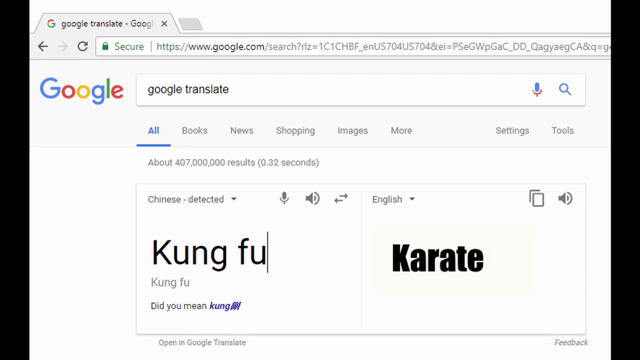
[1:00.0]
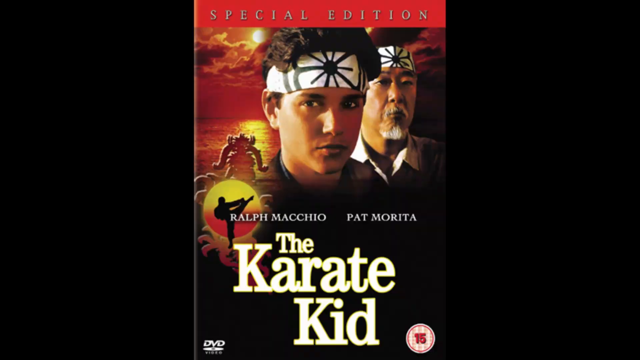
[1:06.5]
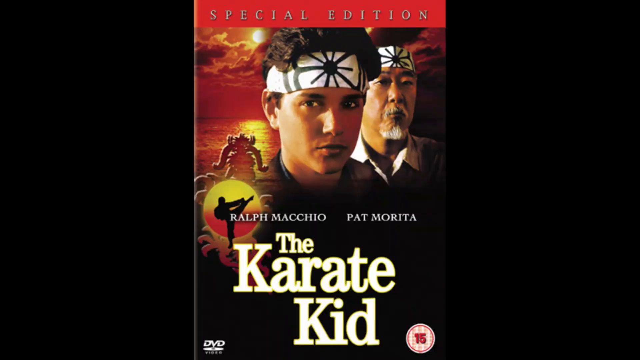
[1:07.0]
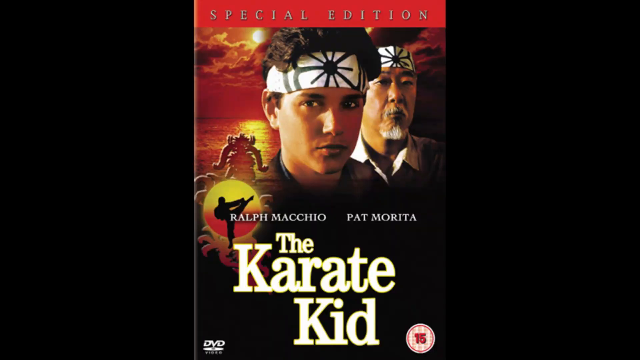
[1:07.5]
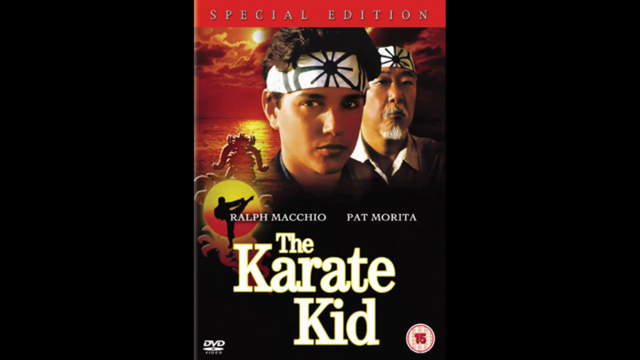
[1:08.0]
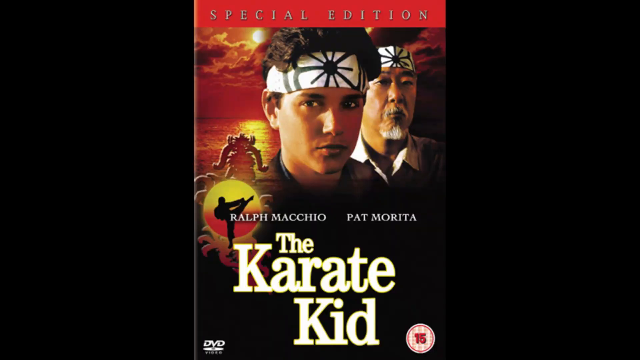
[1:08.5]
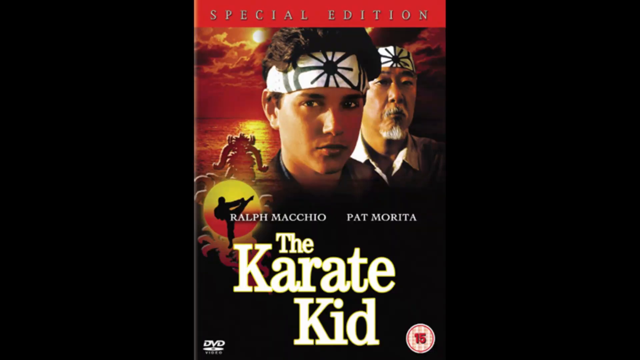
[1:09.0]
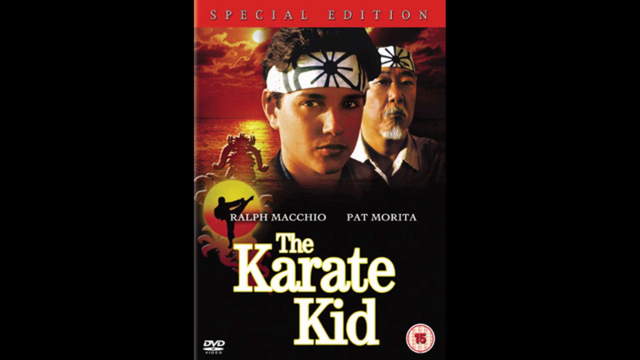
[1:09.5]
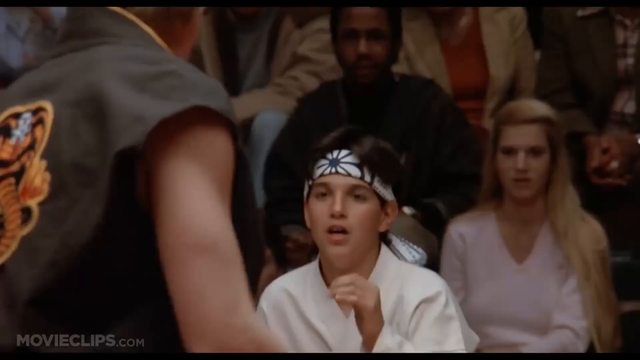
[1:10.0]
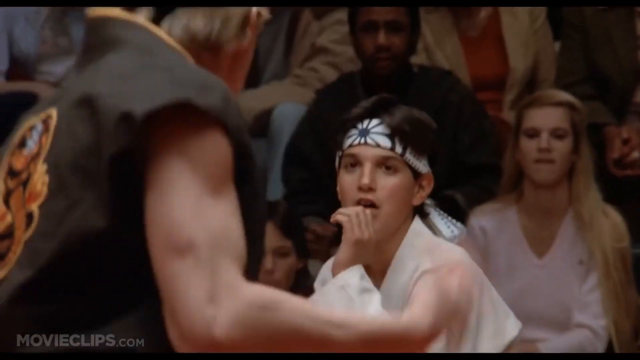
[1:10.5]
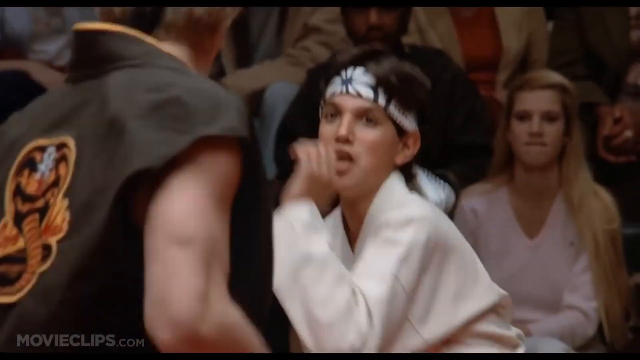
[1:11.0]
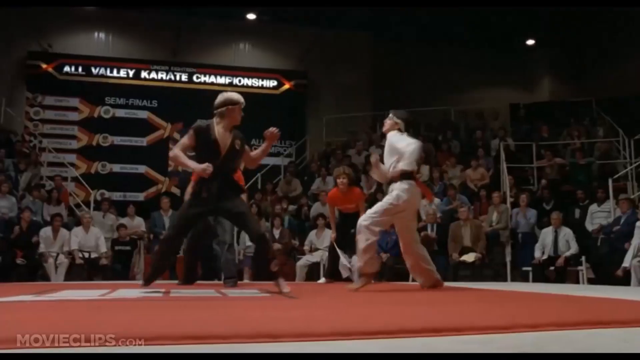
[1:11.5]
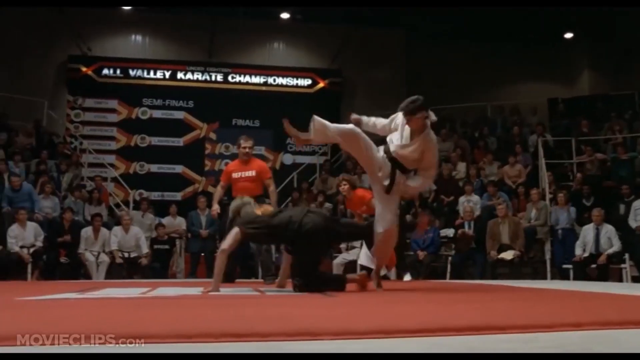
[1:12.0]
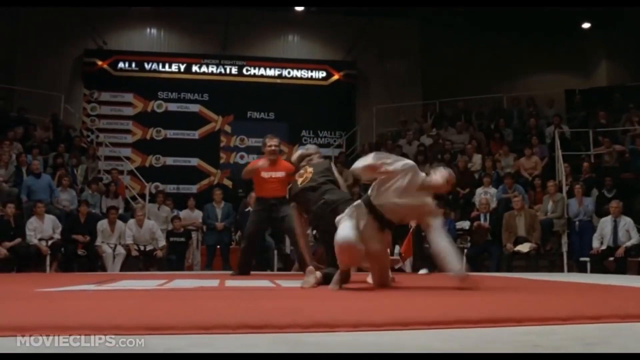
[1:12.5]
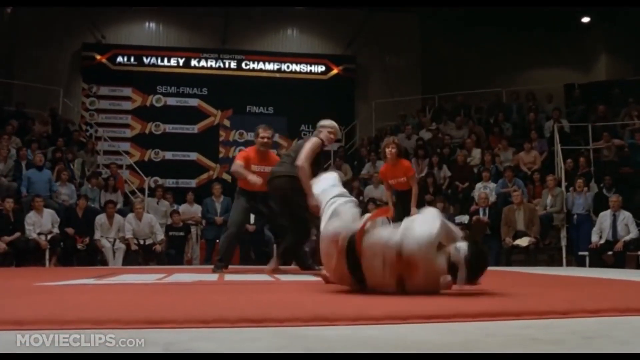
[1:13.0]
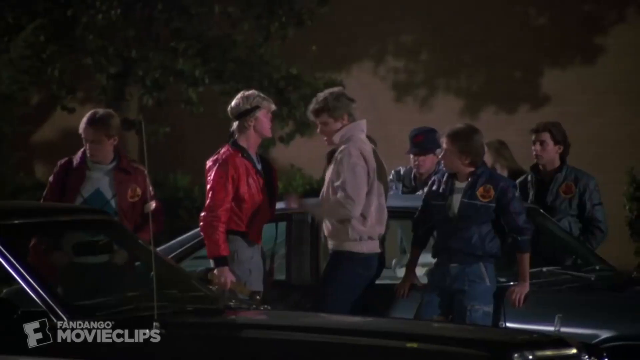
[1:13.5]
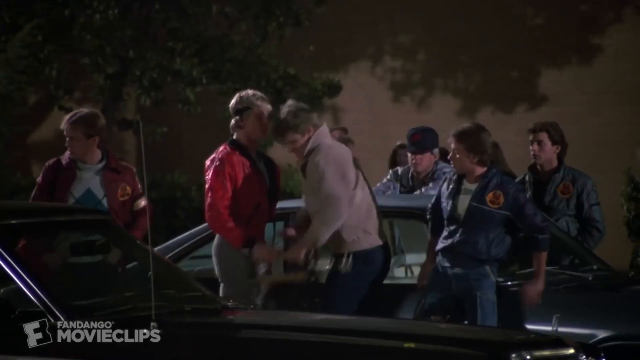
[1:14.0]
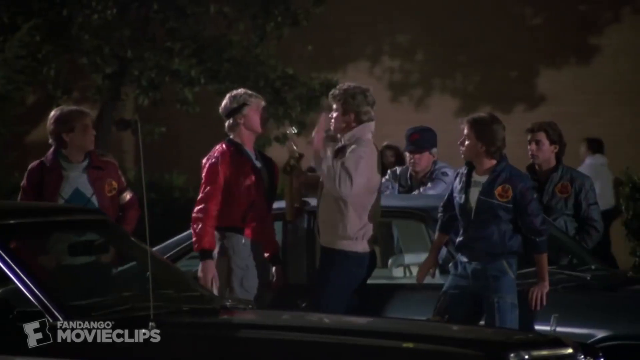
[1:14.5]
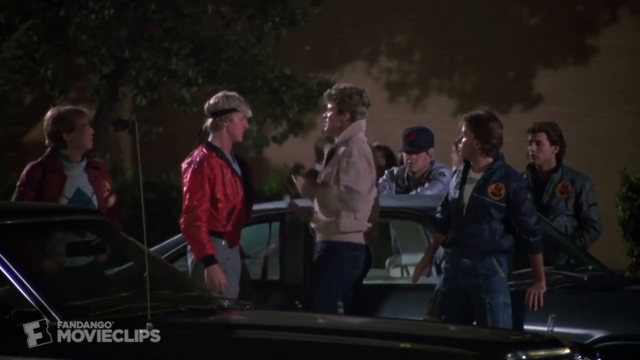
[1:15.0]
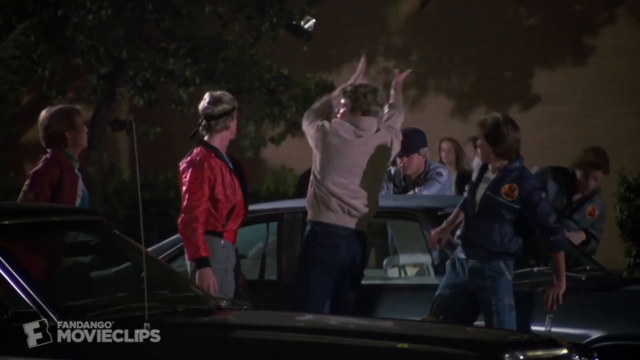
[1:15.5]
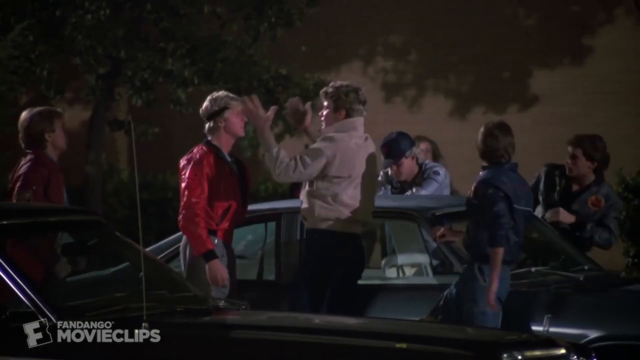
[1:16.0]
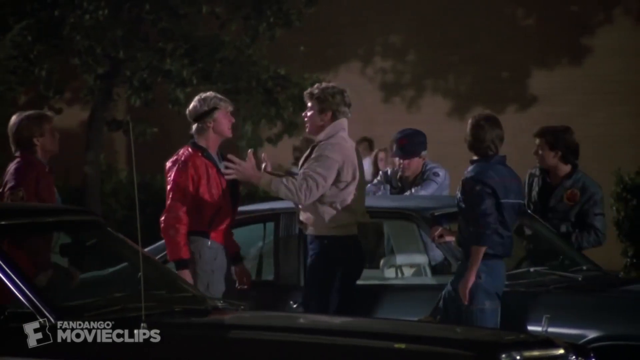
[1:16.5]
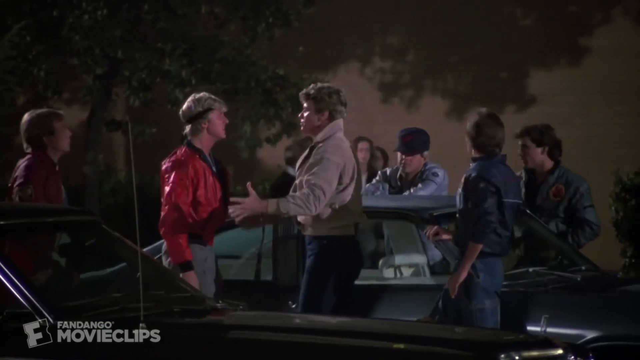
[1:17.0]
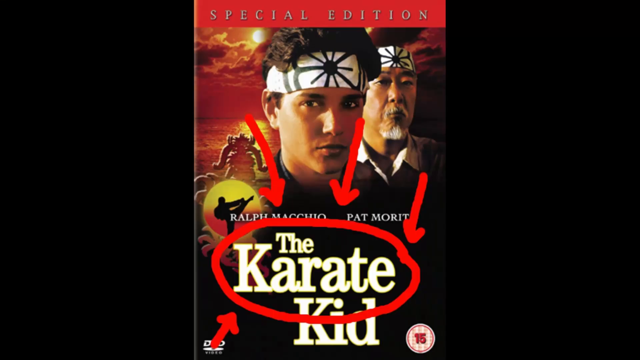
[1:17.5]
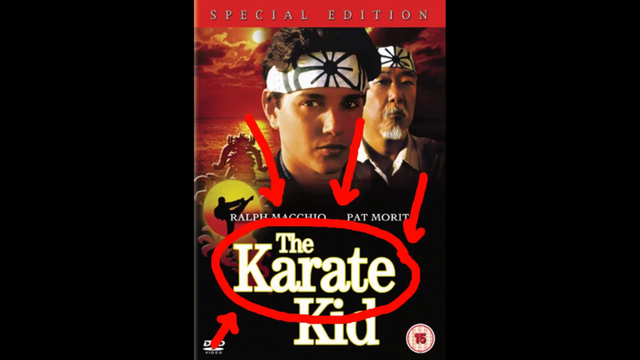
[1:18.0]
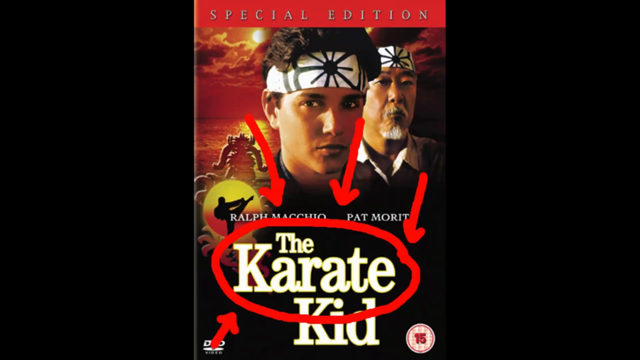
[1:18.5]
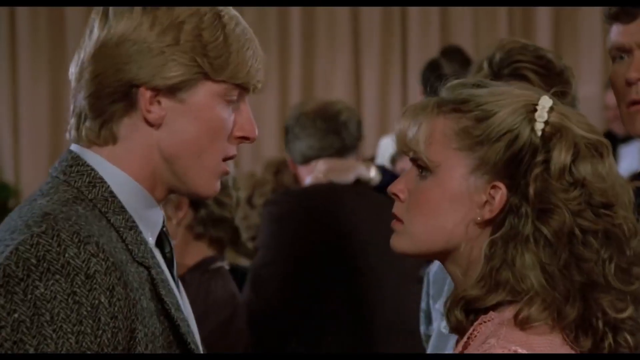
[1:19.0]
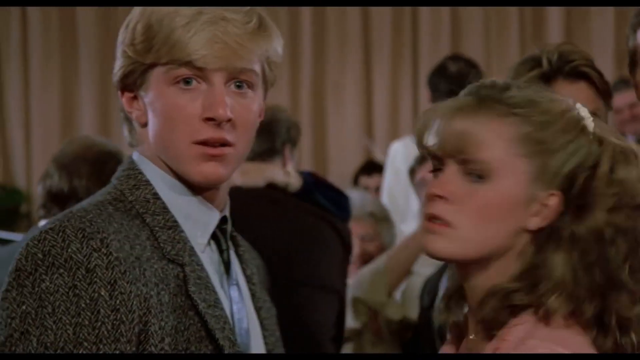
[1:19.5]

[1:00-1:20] A translation of Kung Fu is shown, giving Karate as the meaning. A special edition of the karate kid is shown. Boys wearing white headbands and karate outfits fight each other in what is described as a karate competition. Another person, wearing a red jacket, has something taken forcefully from his hands and looks at a guy shouting at him; they are about to fight.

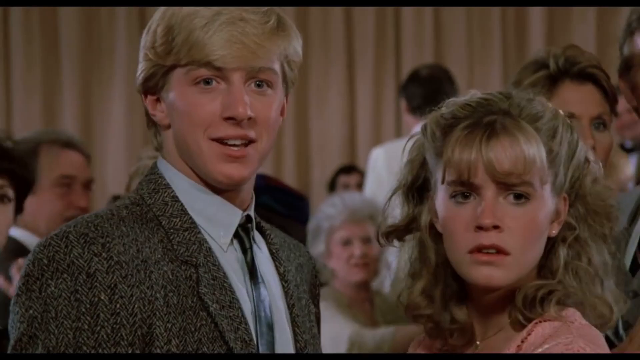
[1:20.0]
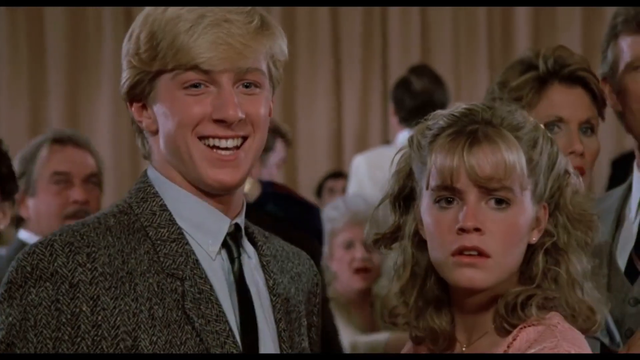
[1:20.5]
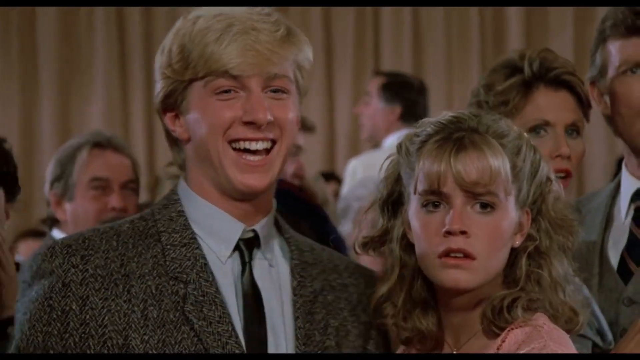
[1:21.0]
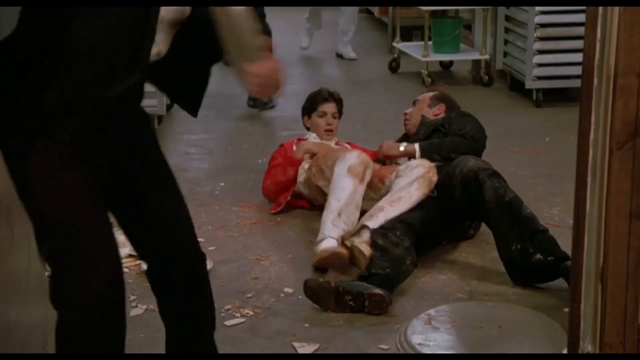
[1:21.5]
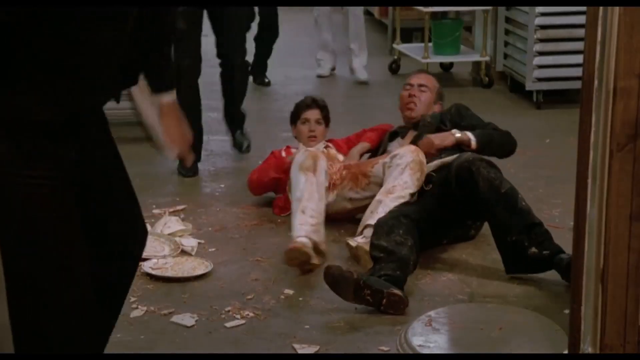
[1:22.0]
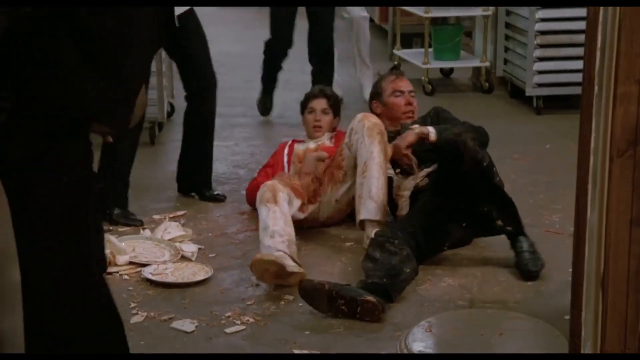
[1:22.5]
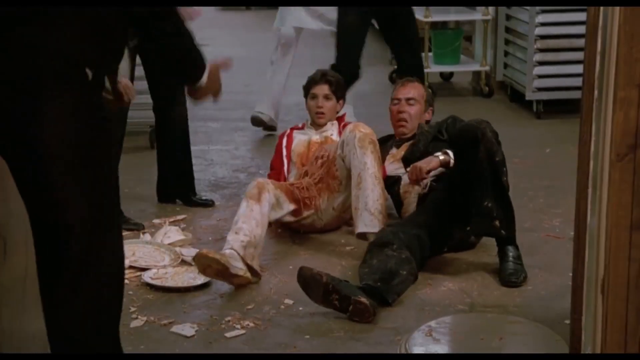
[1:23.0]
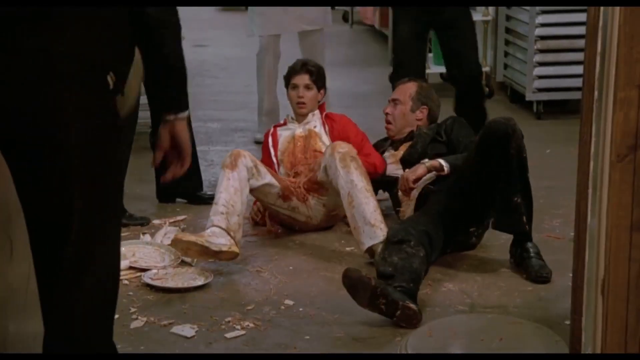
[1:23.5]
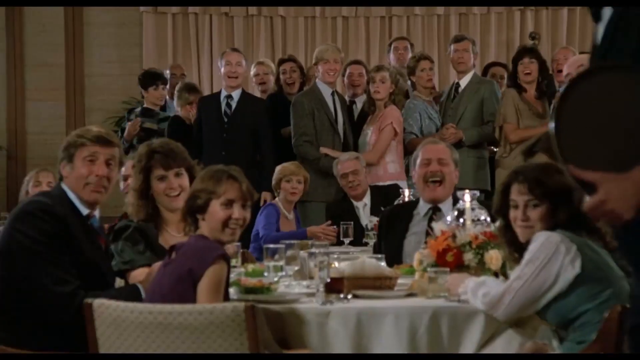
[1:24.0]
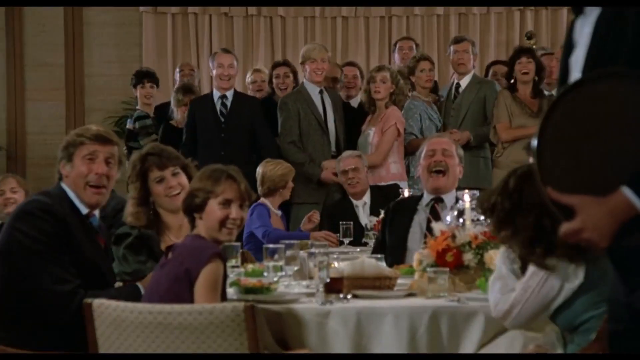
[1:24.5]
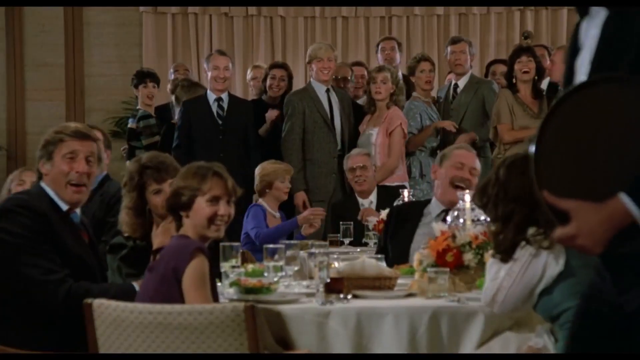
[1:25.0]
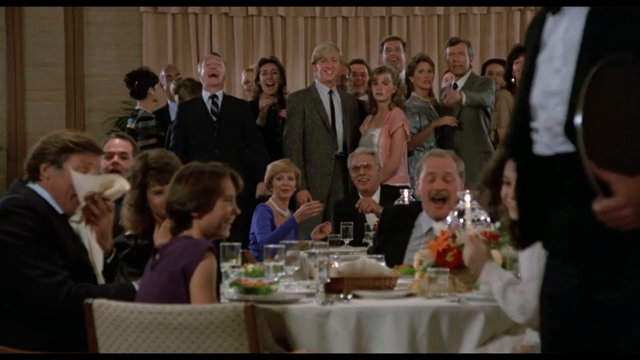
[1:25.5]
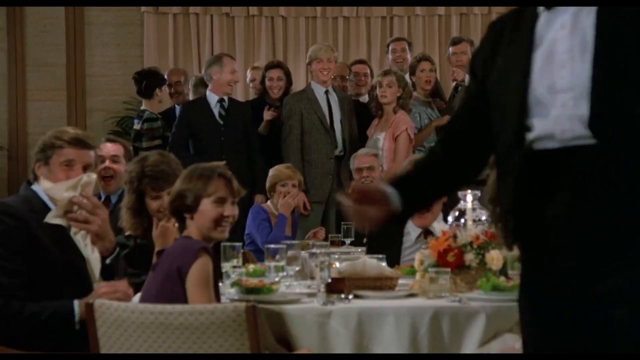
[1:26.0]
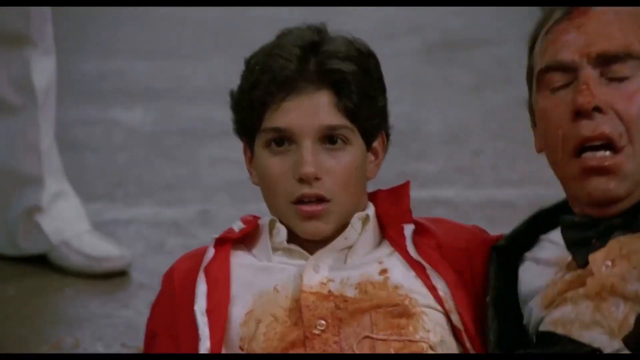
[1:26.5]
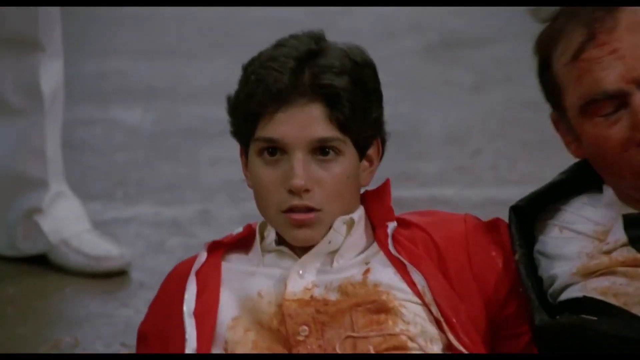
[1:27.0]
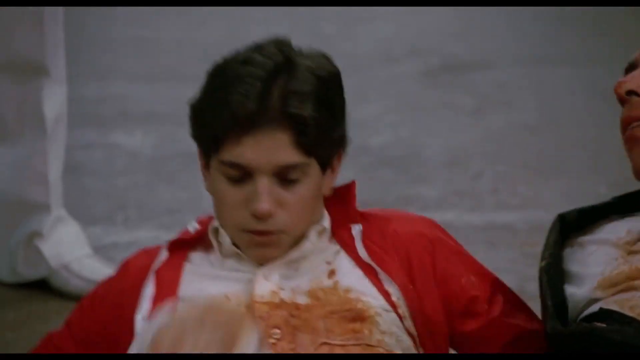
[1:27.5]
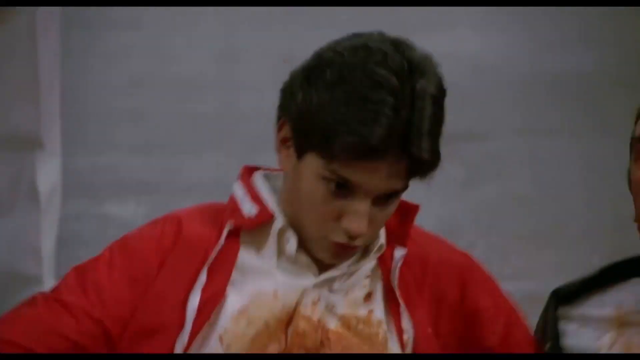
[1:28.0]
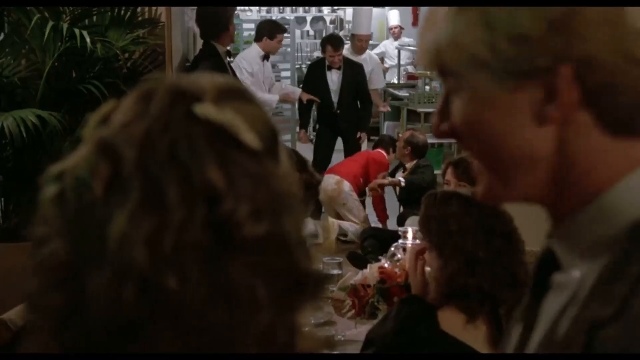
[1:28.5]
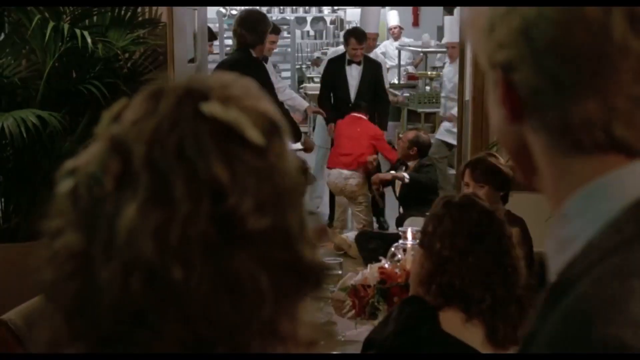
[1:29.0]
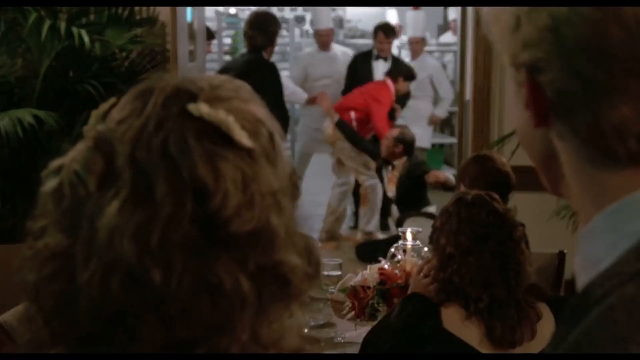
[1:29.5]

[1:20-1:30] A girl and a boy are watching. One boy has fallen, and the boy standing with the girl laughs at him. People look at them and laugh hard, while the girl appears frustrated. Two males, a young boy and an older man, seem to have fallen and gotten themselves dirty, and they appear embarrassed. The other boy, apparently the one in a red jacket with a white shirt, runs away. A lady wearing a pink dress stares at them, and her partner laughs at them.